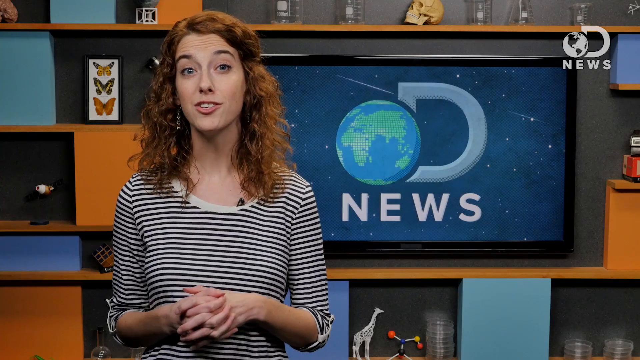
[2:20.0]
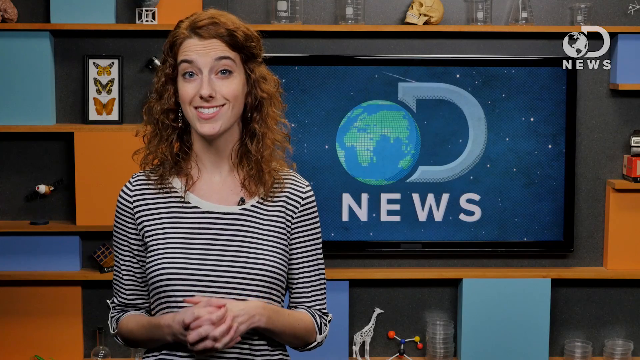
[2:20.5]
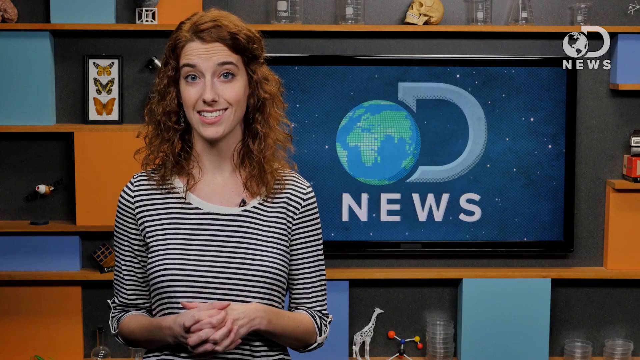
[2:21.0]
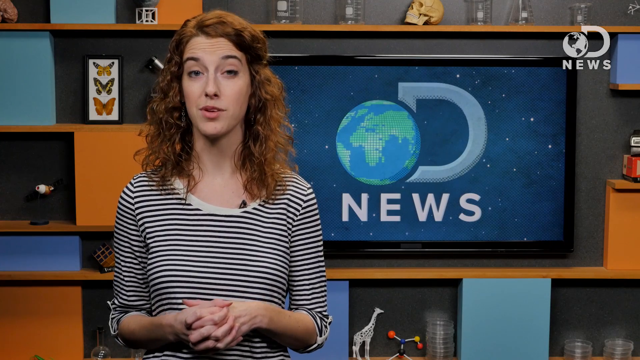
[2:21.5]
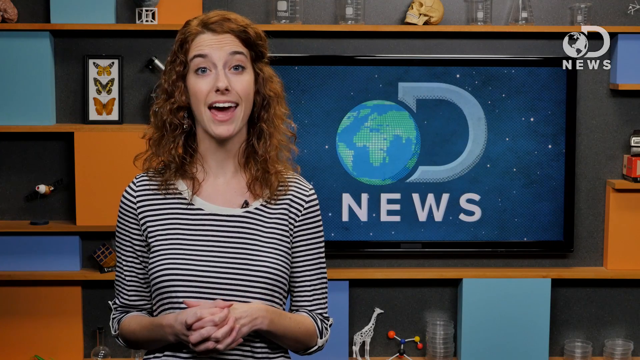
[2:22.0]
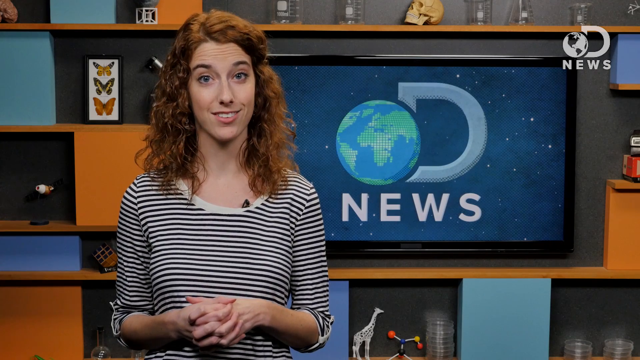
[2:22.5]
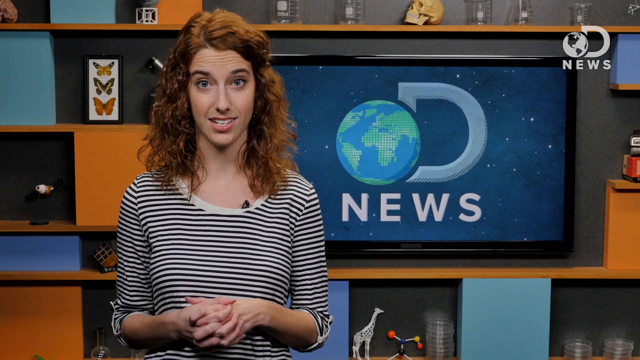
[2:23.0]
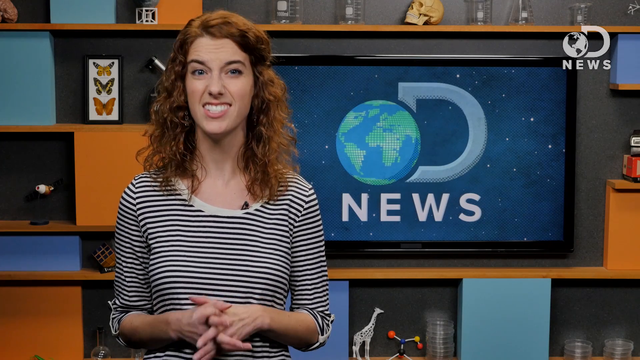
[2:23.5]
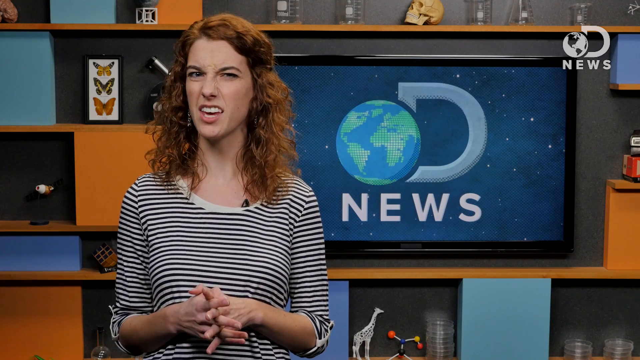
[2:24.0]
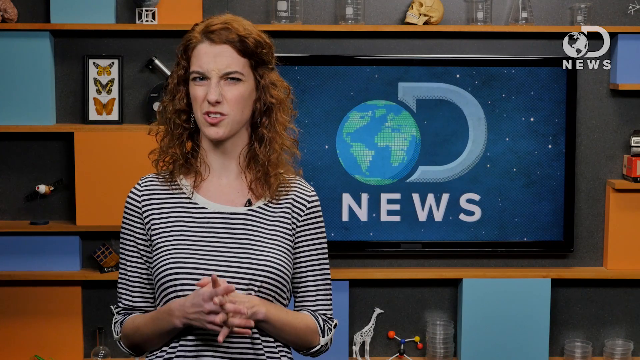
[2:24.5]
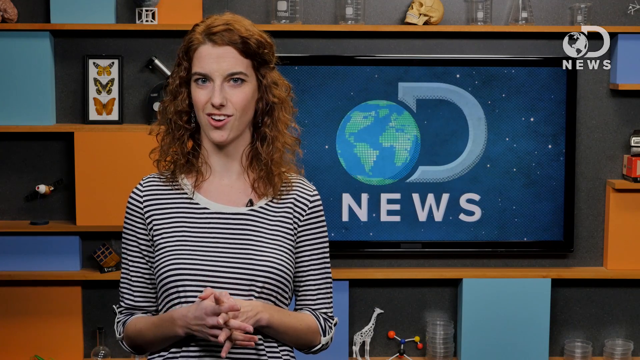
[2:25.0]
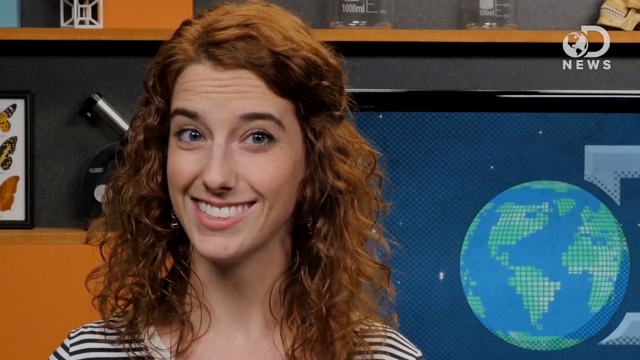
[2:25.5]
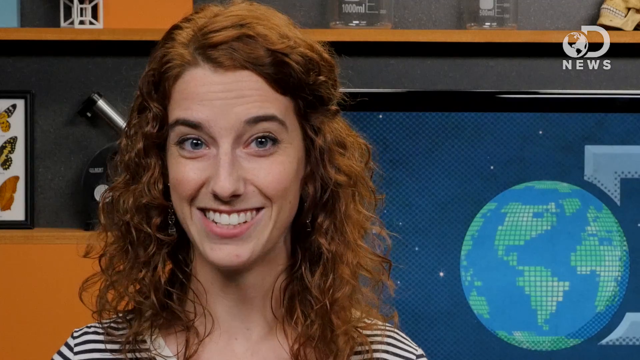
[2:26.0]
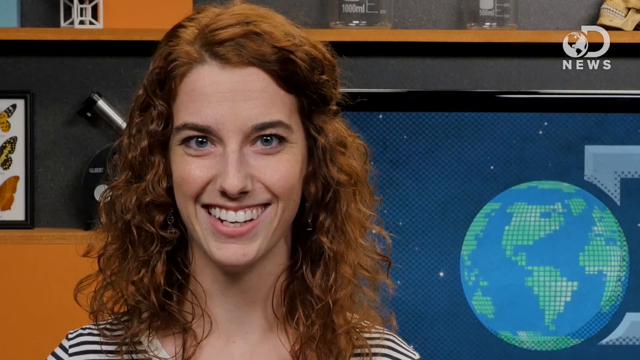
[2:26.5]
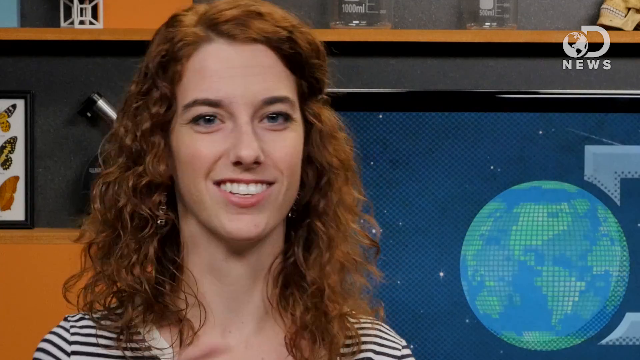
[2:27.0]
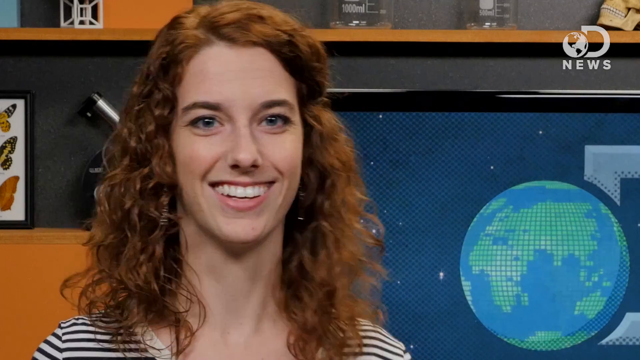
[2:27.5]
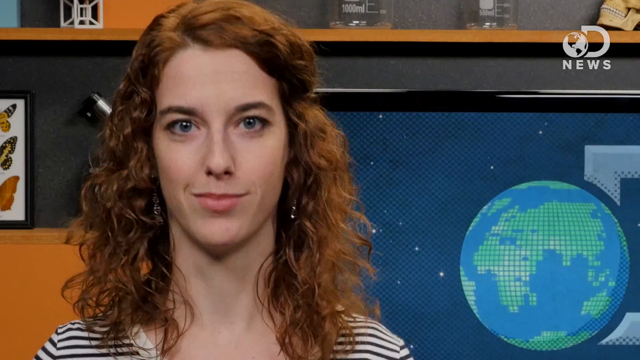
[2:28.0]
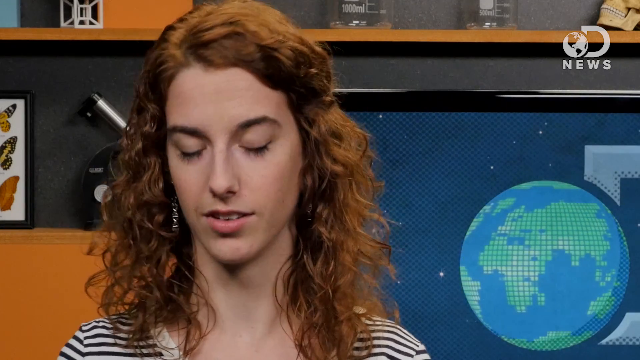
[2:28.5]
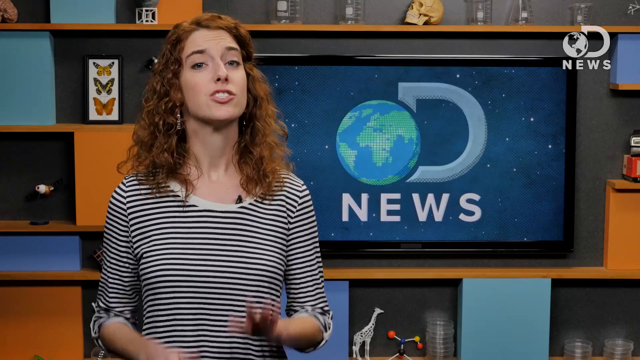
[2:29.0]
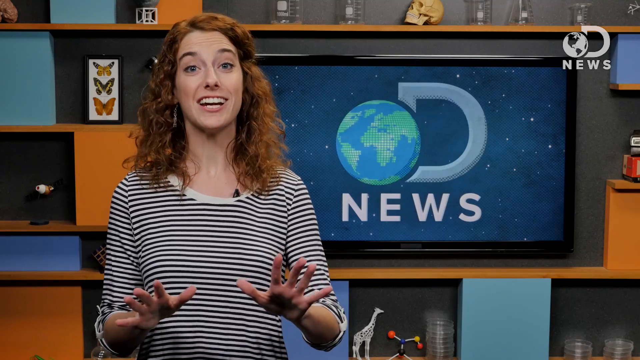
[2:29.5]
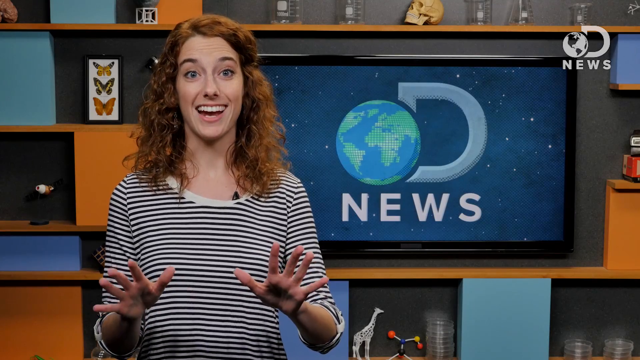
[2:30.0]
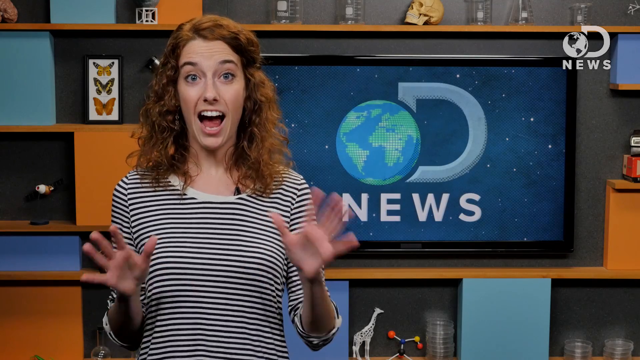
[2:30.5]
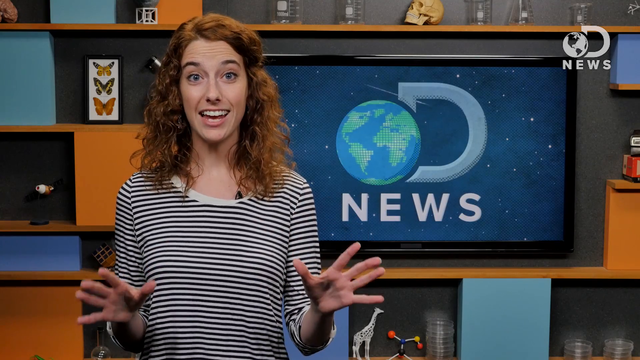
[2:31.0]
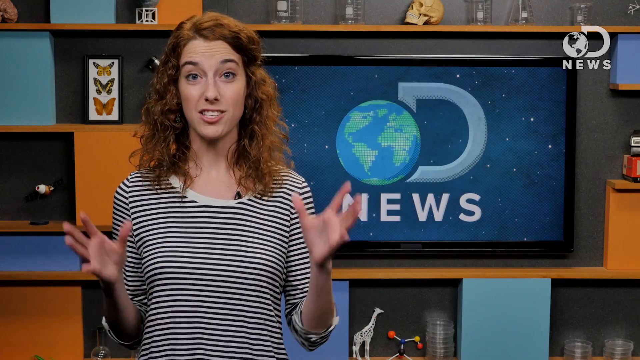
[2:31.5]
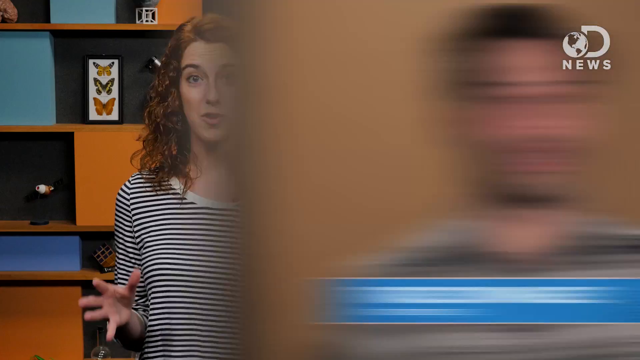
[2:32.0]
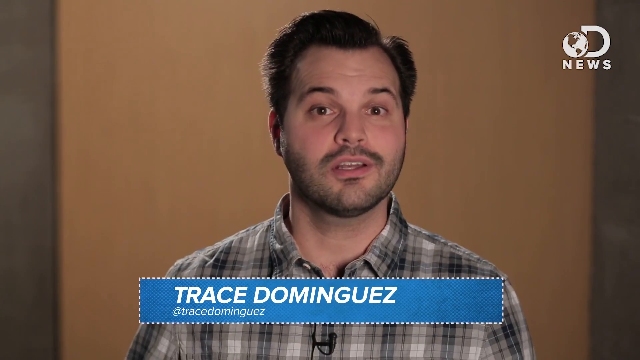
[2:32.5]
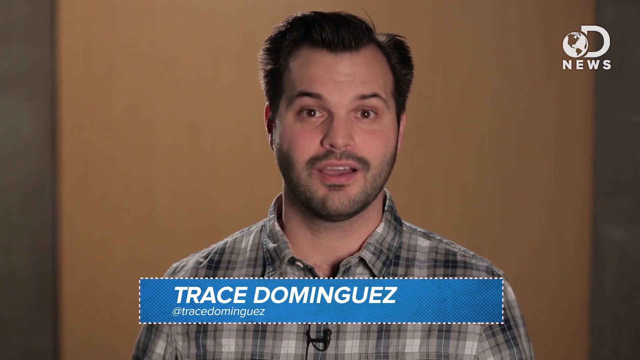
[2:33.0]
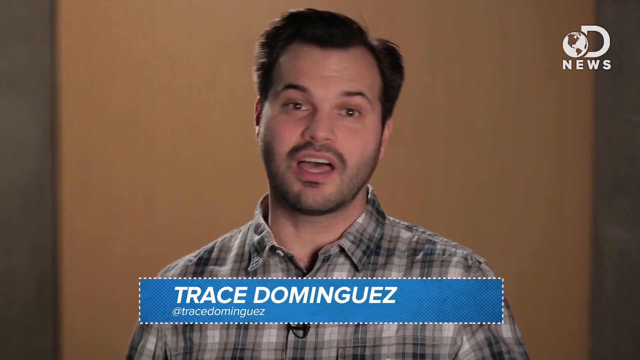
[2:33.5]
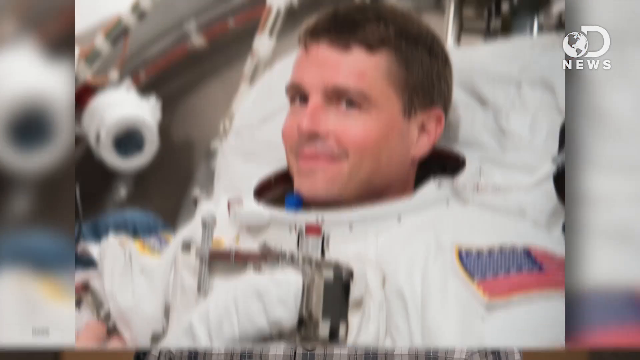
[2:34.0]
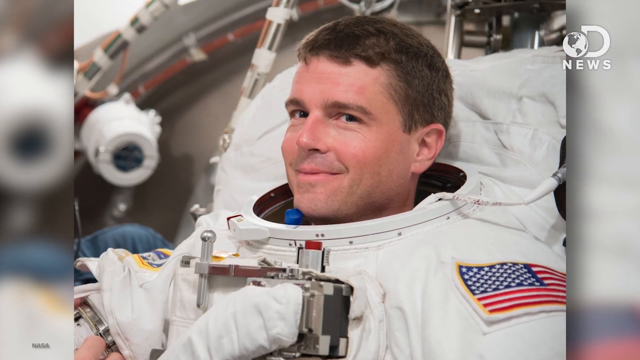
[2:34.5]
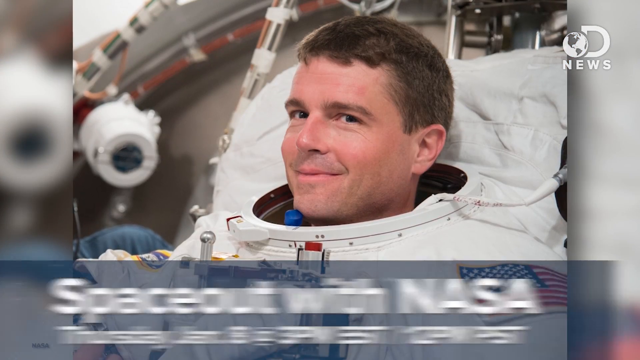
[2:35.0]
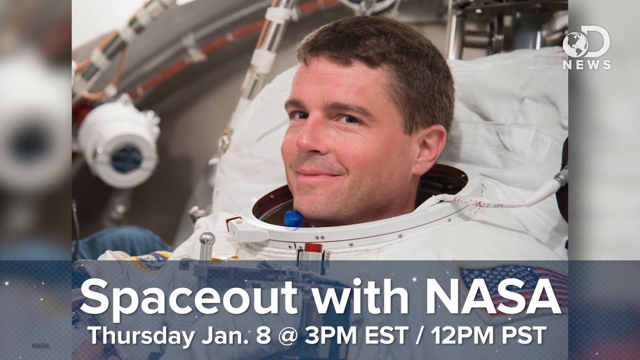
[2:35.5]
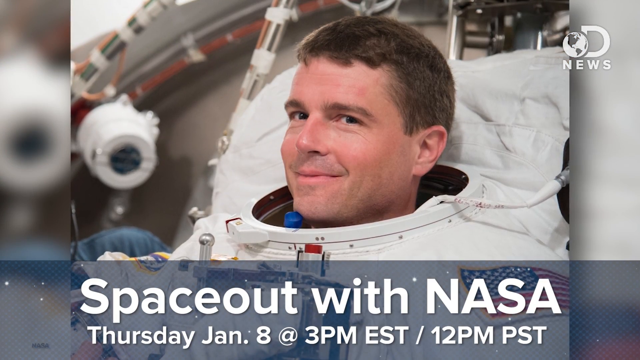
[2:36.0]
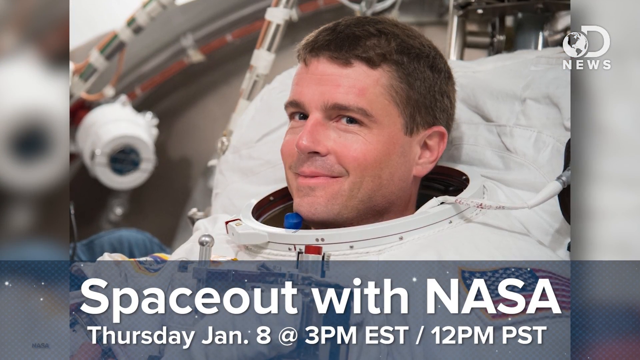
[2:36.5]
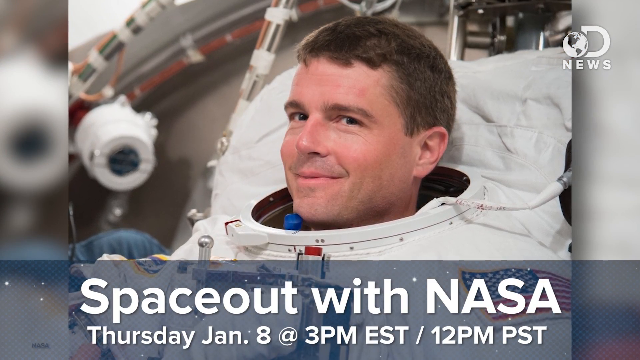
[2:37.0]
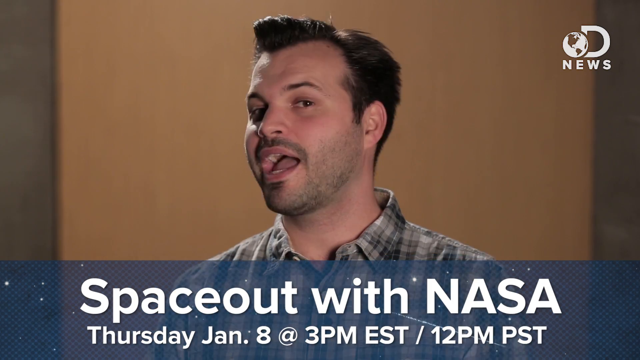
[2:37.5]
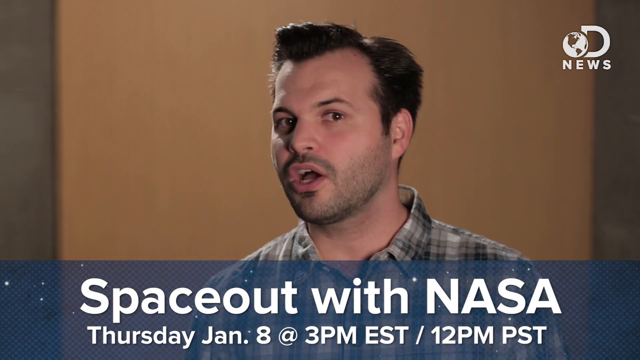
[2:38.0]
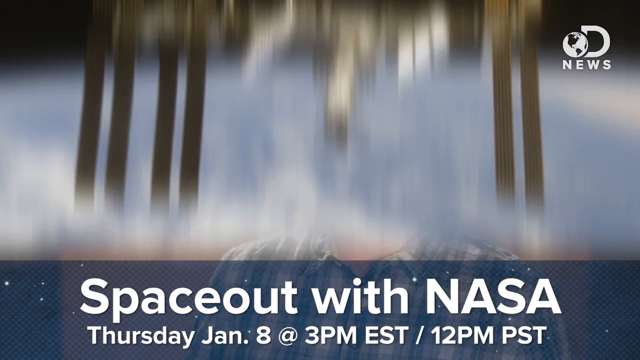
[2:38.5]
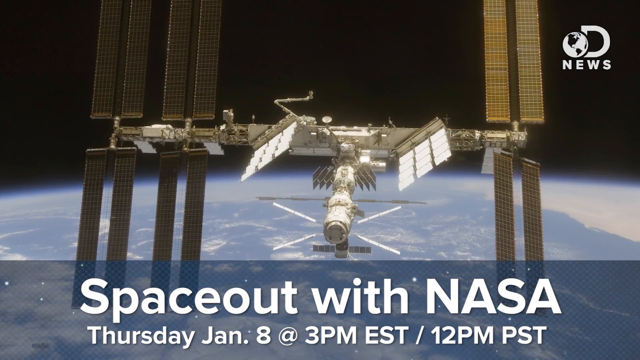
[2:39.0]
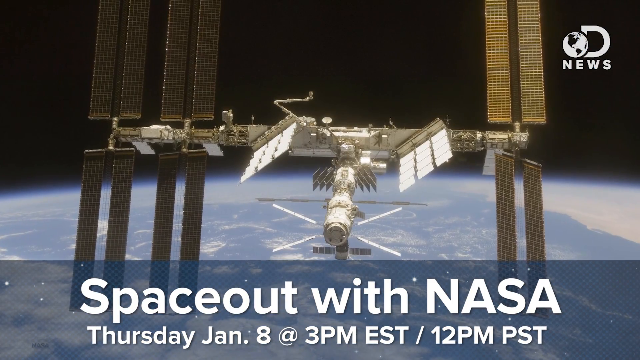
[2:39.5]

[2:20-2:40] A young woman with red hair talks next to a TV whose screen shows a spinning earth, with the letter D next to it and "news" under that. Then Trace Dominguez is shown speaking, followed by "space out with NASA." The video returns to the red-haired woman talking, then shows a picture of an astronaut and a satellite. It cuts back to the woman, who smiles and talks a lot with her hands, then to the astronaut and the other things in space, and goes back and forth.